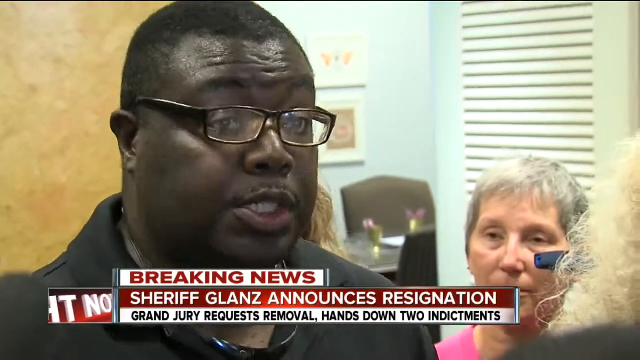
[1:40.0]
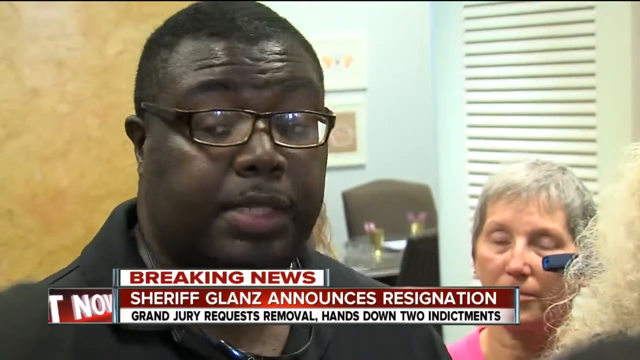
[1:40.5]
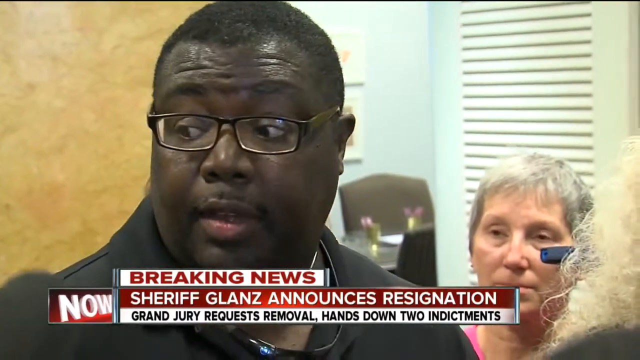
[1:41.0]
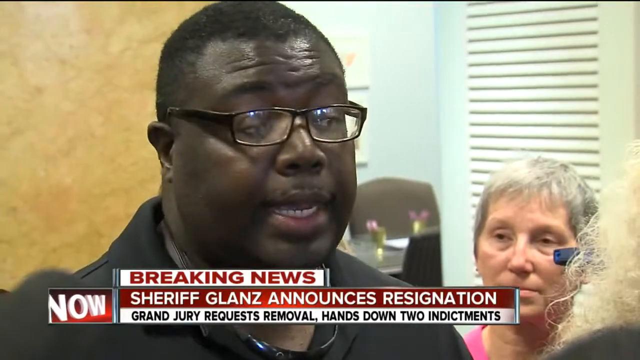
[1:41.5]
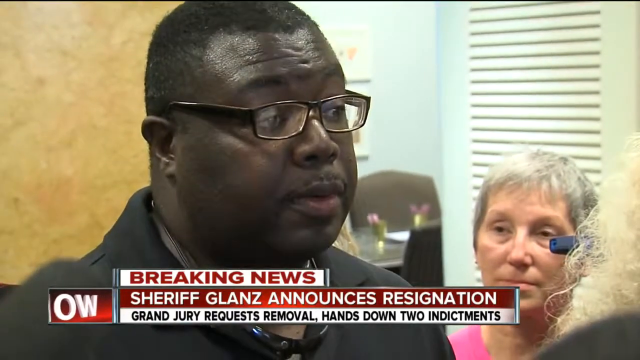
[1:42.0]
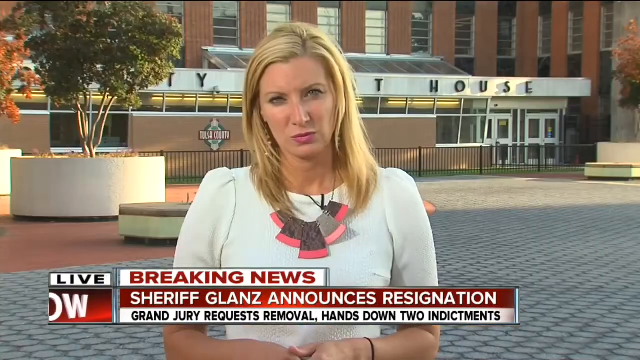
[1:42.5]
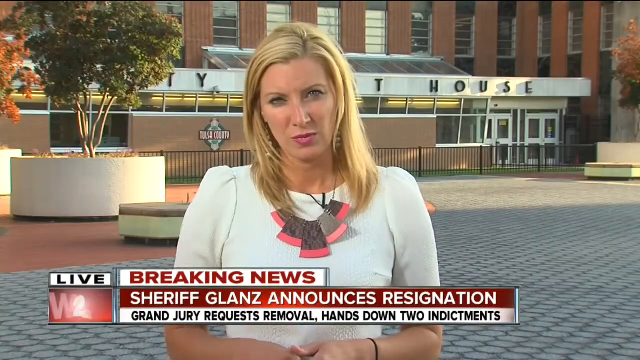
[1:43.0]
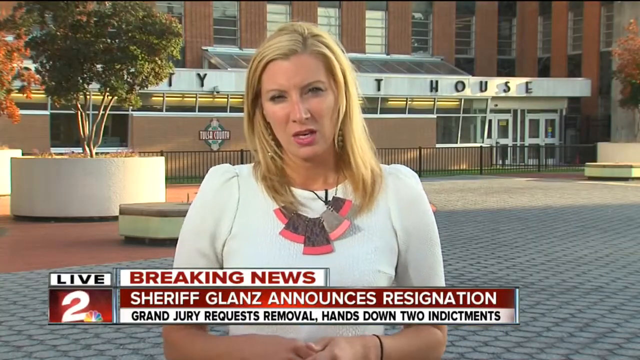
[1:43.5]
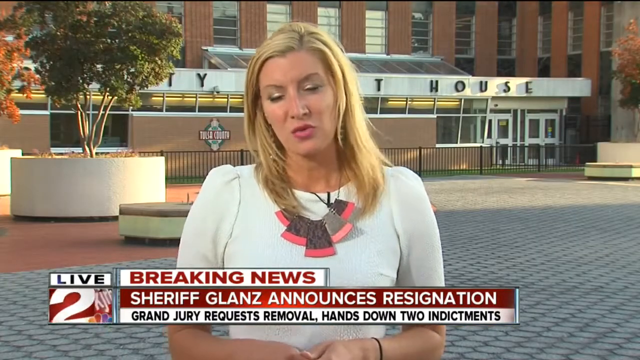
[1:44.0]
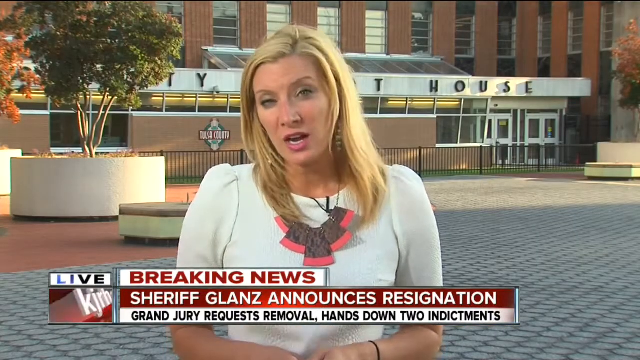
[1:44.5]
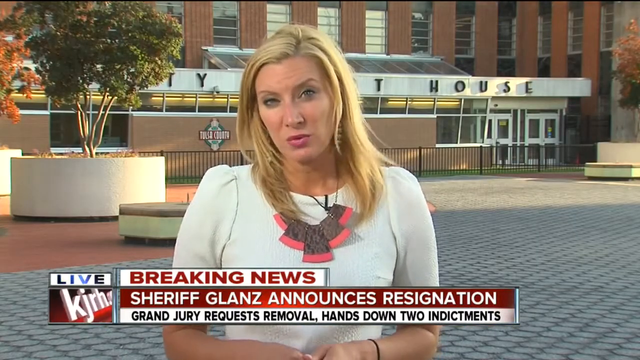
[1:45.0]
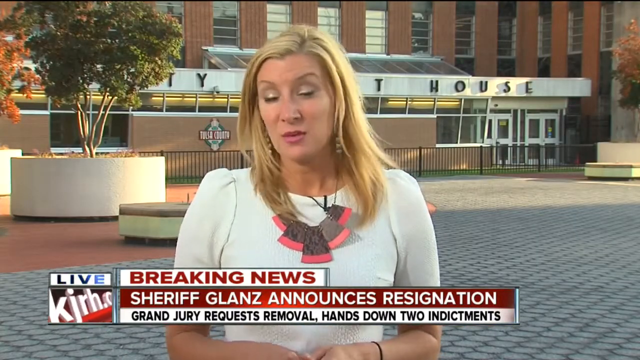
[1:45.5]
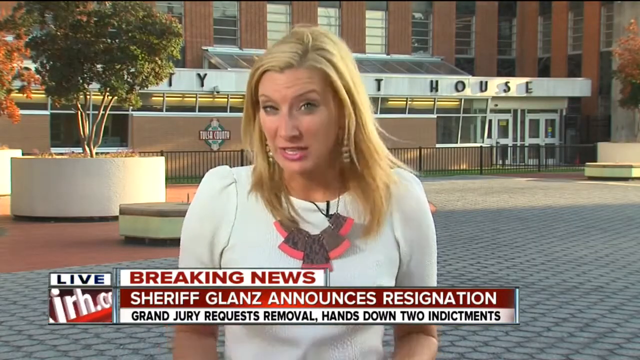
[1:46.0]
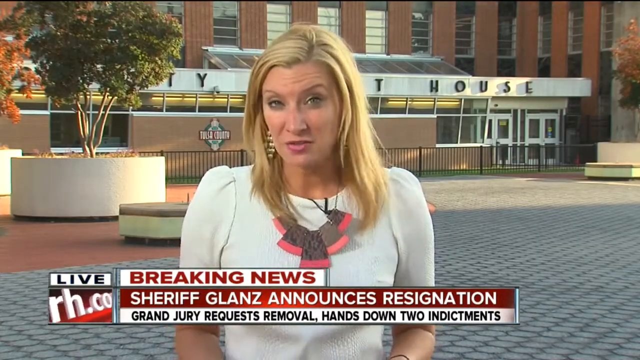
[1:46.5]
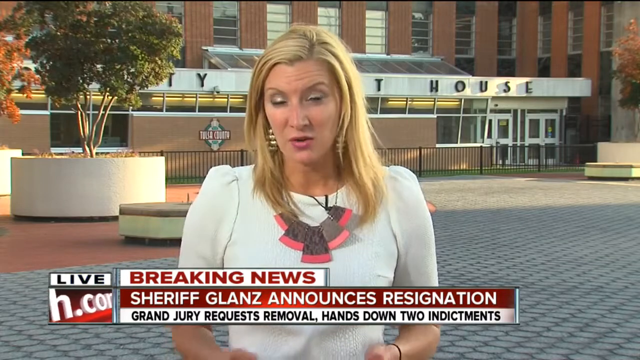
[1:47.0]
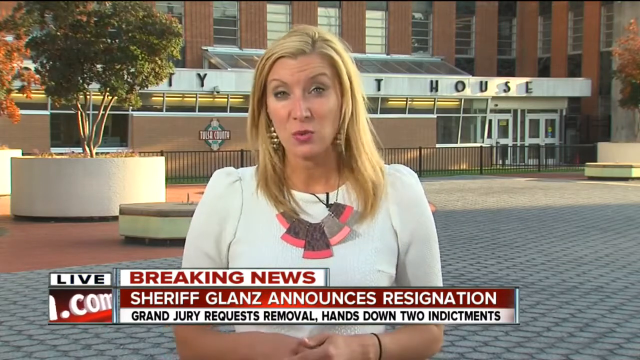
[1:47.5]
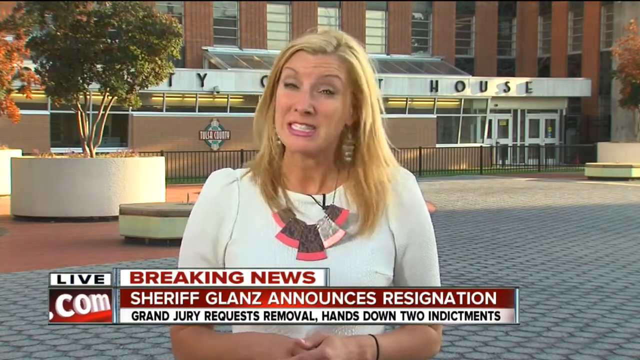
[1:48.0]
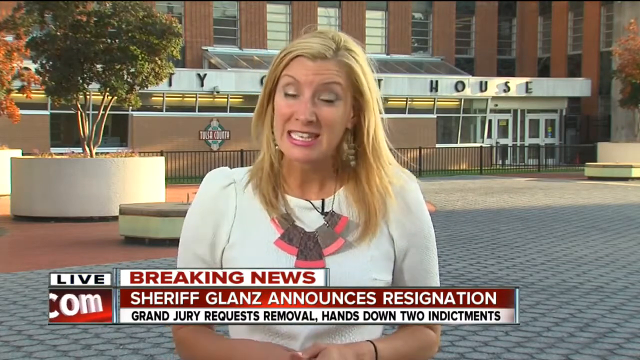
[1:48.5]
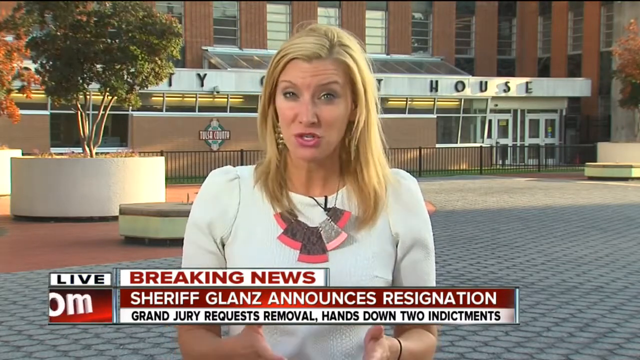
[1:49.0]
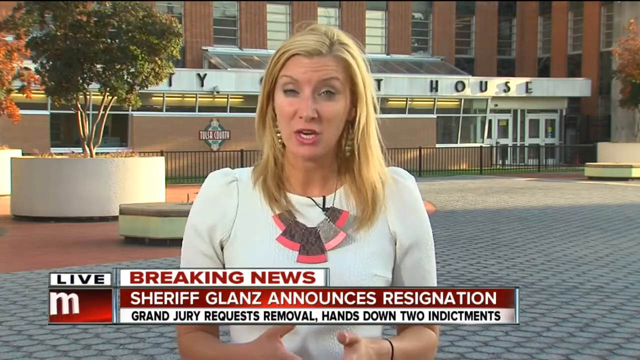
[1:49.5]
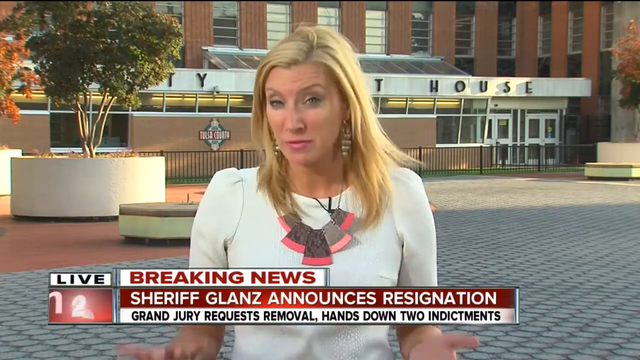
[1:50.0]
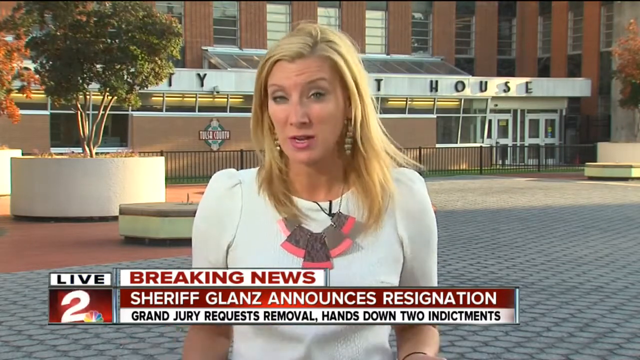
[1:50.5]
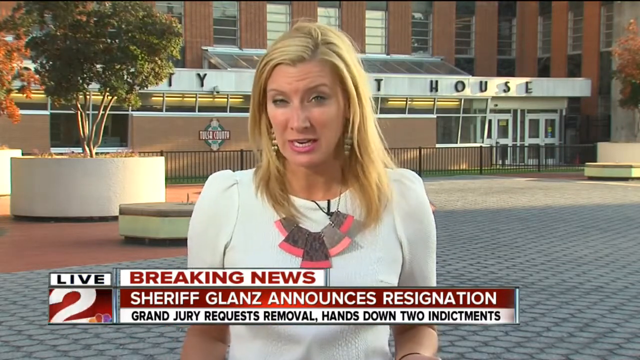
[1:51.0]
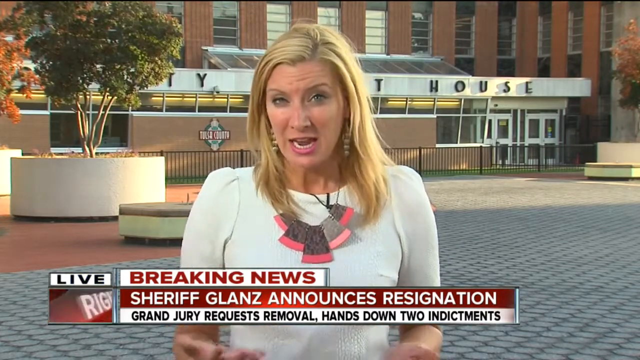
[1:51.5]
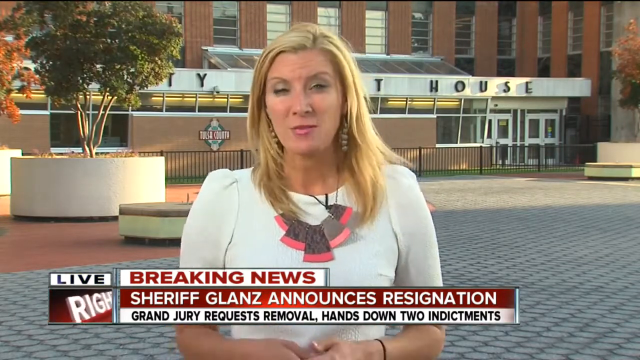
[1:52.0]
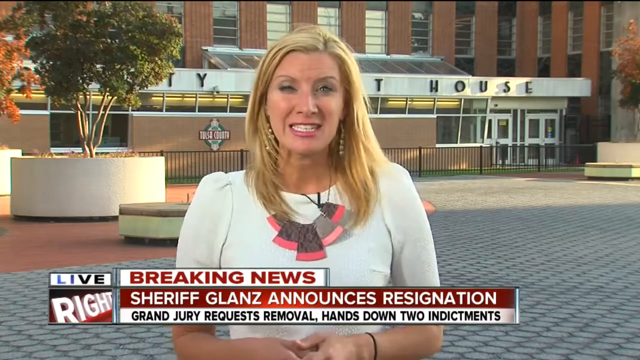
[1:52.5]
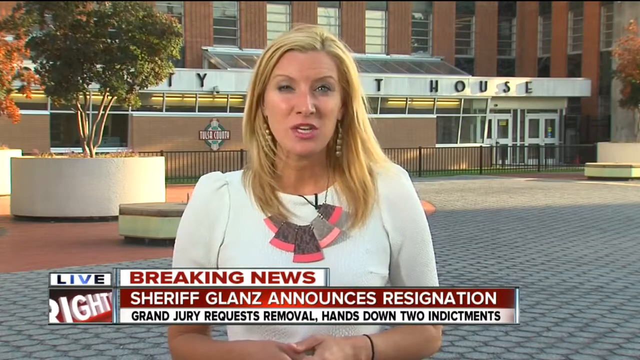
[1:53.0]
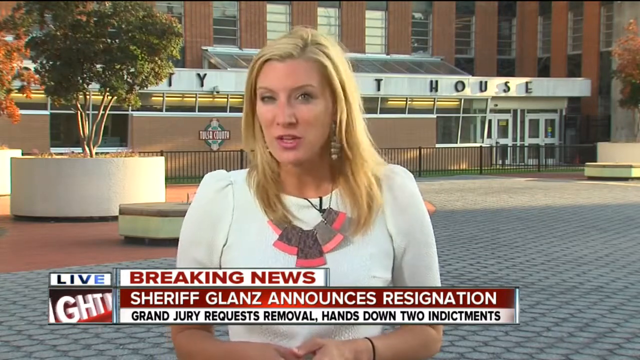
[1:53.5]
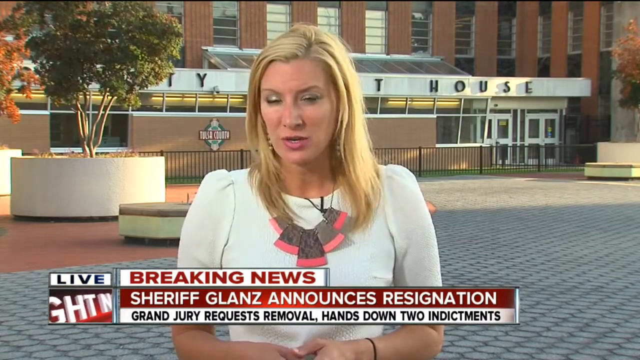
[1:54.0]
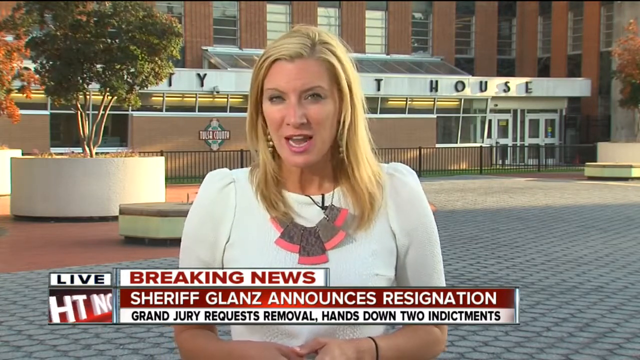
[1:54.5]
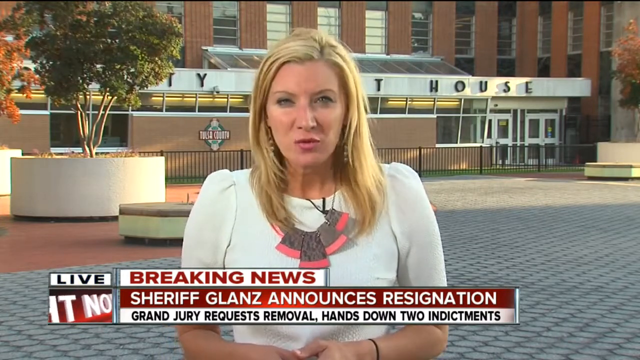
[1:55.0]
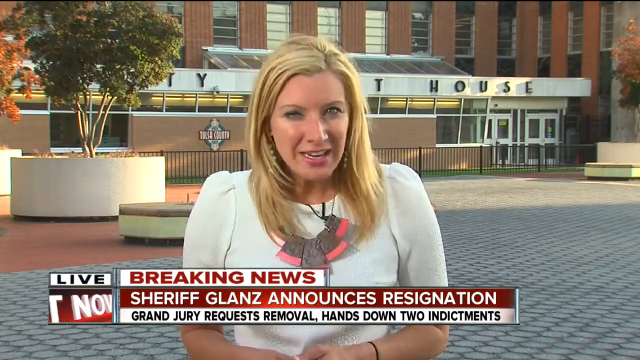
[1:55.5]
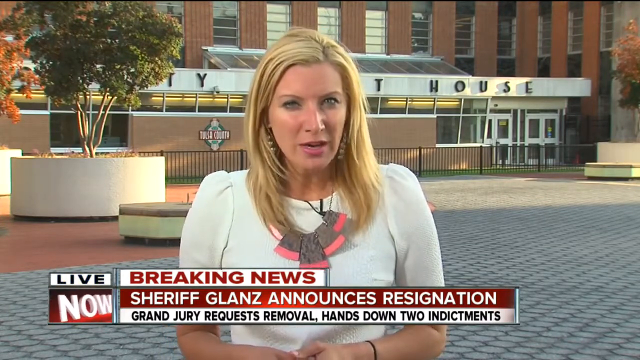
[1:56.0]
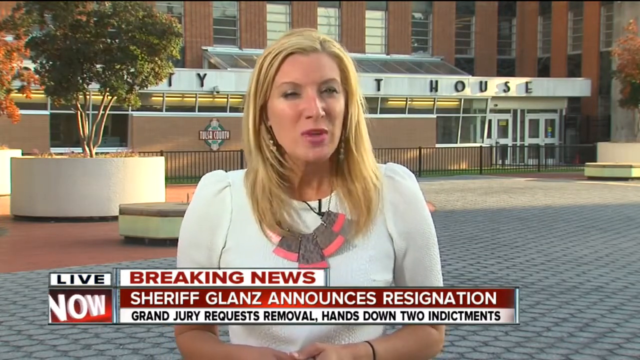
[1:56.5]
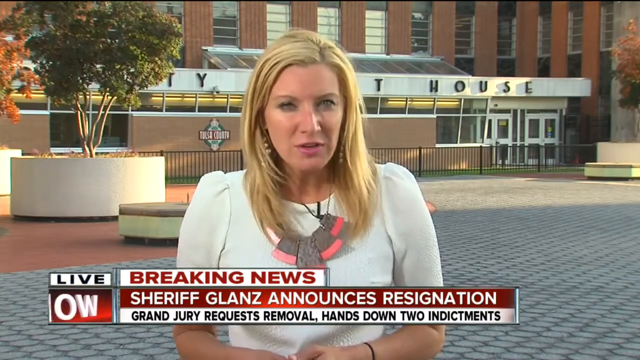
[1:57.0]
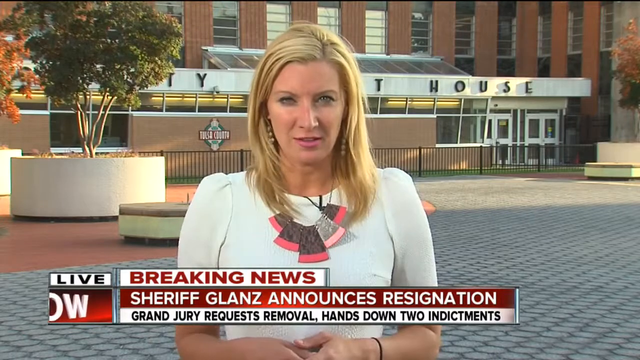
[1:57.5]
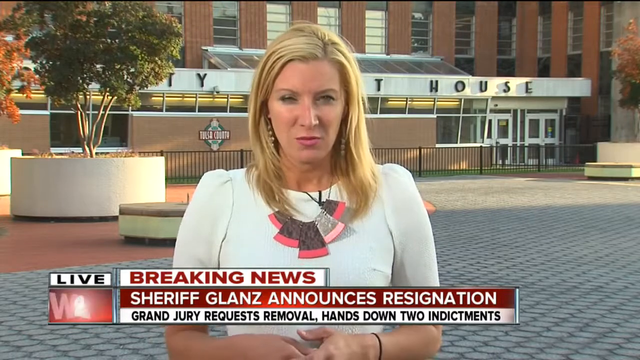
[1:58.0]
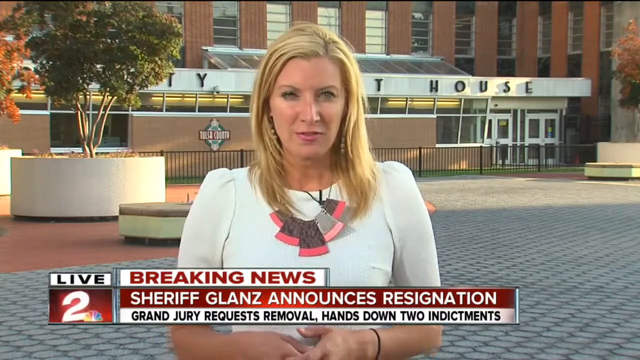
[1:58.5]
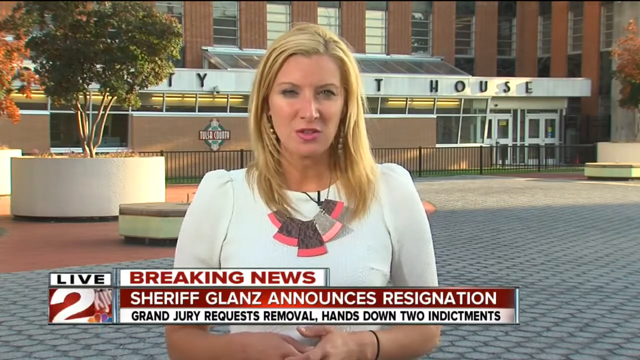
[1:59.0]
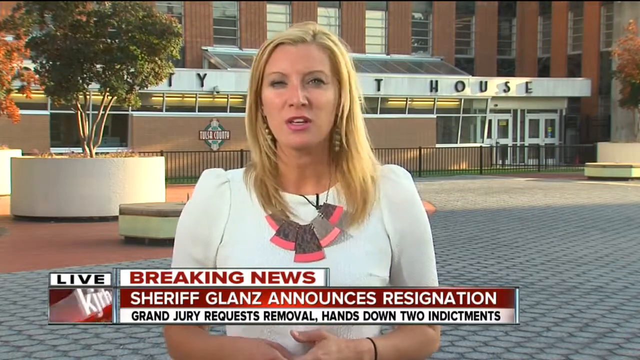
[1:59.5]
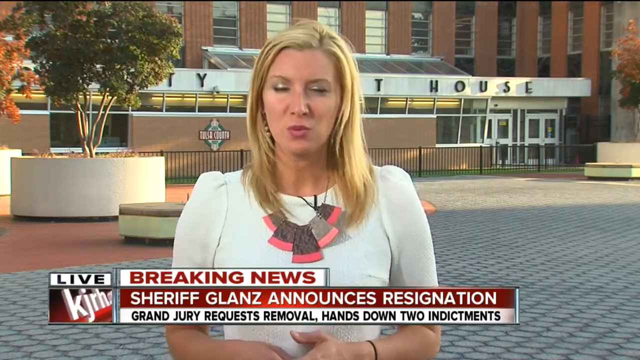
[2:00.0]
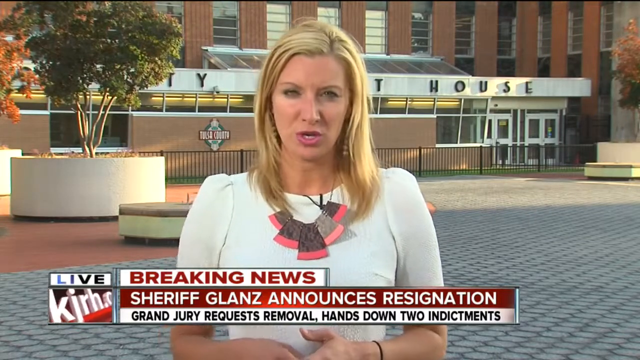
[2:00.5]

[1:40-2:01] The black male with black glasses looks to his right, then looks back directly at a female with curly, light-colored hair. The video transitions to a female news reporter with shoulder-length blonde hair and light eyebrows, wearing pink lipstick, large earrings, a white shirt, and a necklace with five rectangles that are gray at the top and pink at the bottom. She speaks directly at the camera, nodding her head slightly to the left. Behind her is the courthouse building. She stands on gray stones, with red bricks laid out behind her, a white circular decorative area with a tree sapling growing in it, and a black steel fence in front of the courthouse building. She looks at the camera, continuing to speak, gestures and moves her head slightly toward the camera, then stands back up straight.